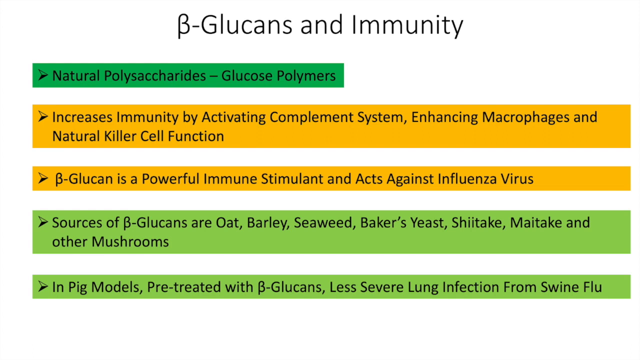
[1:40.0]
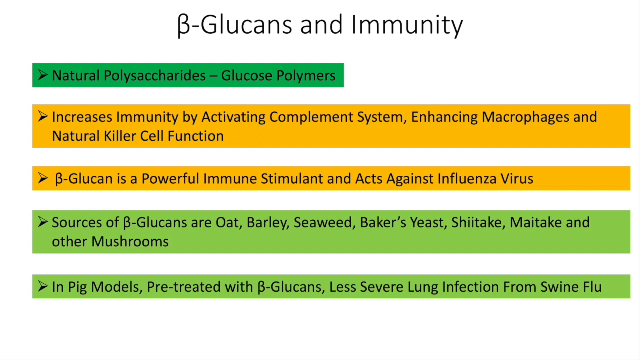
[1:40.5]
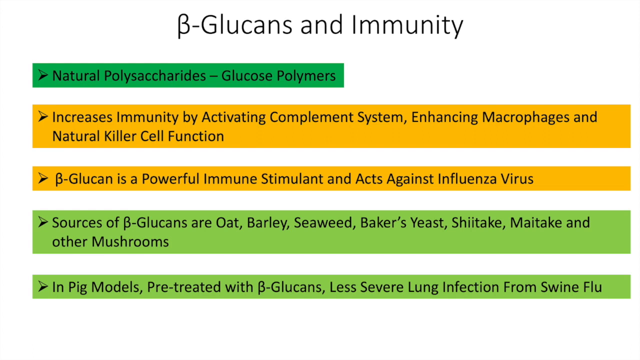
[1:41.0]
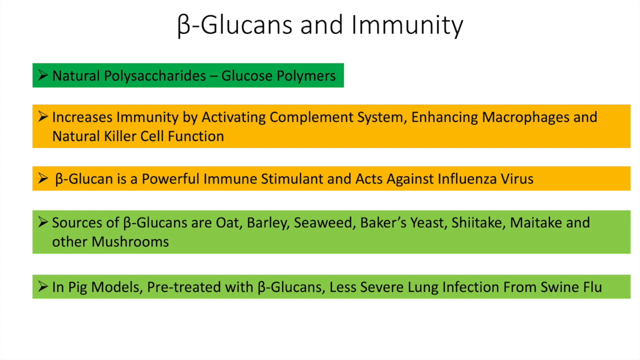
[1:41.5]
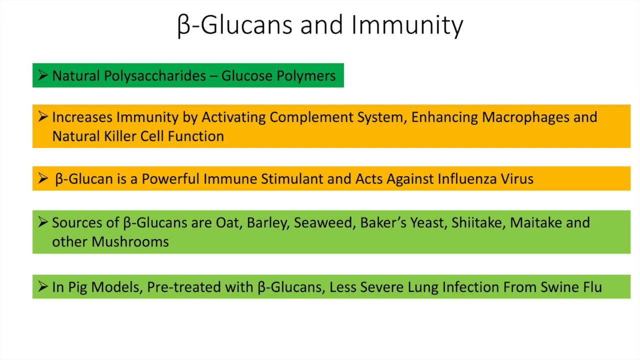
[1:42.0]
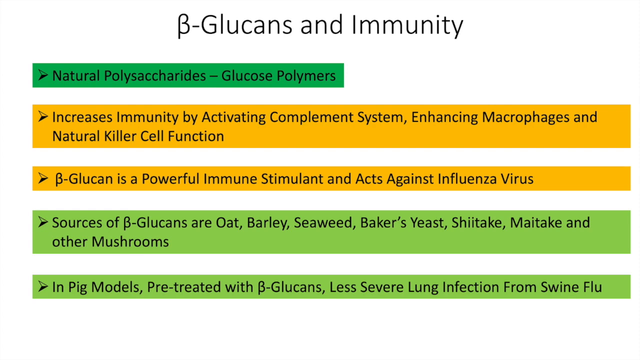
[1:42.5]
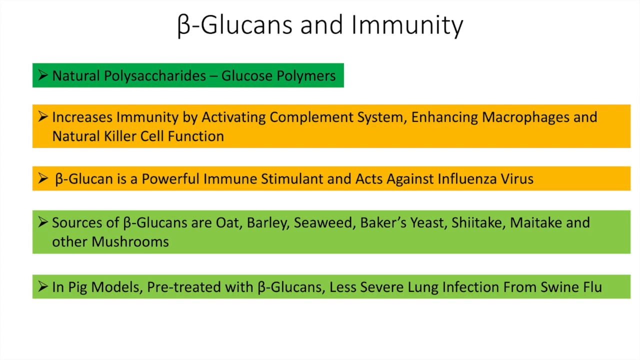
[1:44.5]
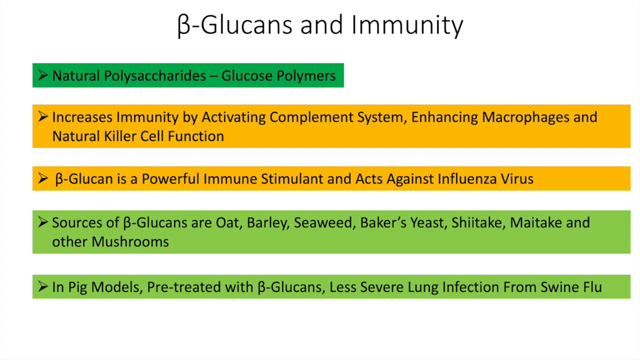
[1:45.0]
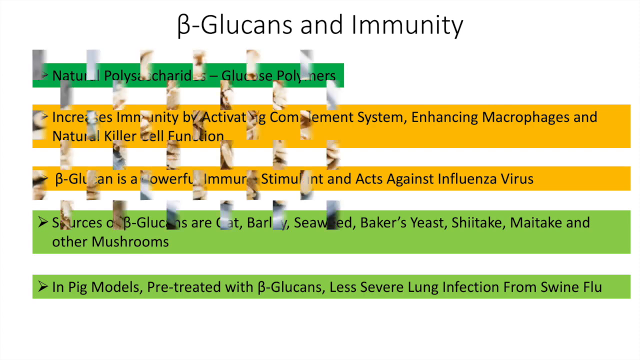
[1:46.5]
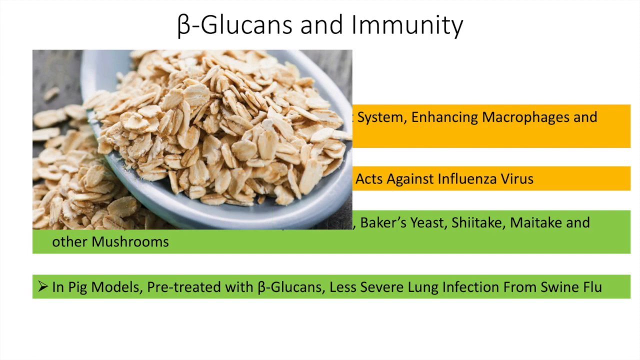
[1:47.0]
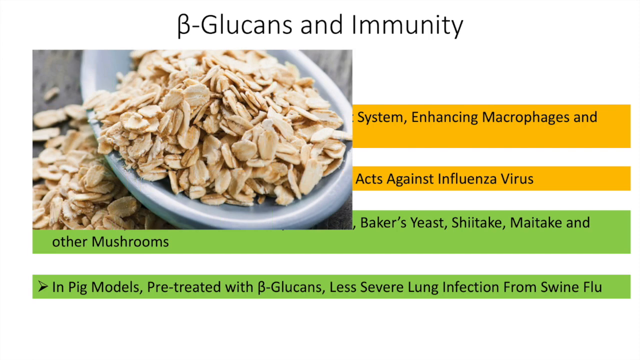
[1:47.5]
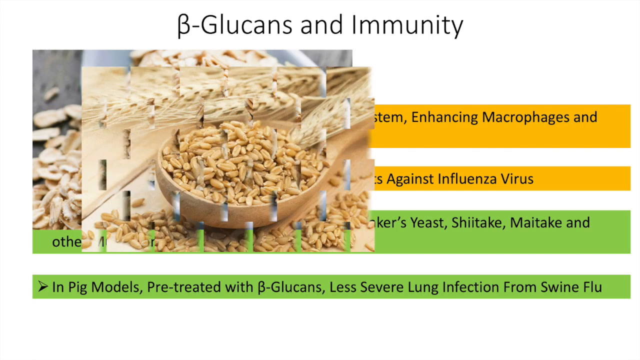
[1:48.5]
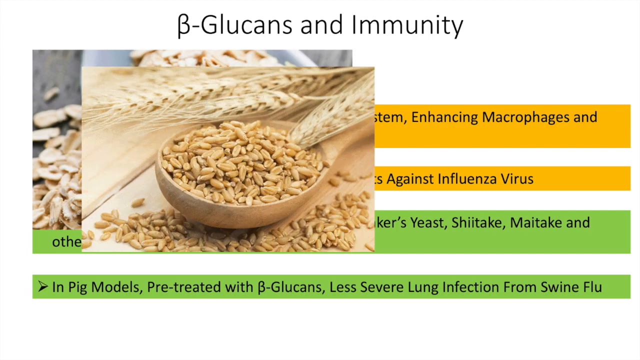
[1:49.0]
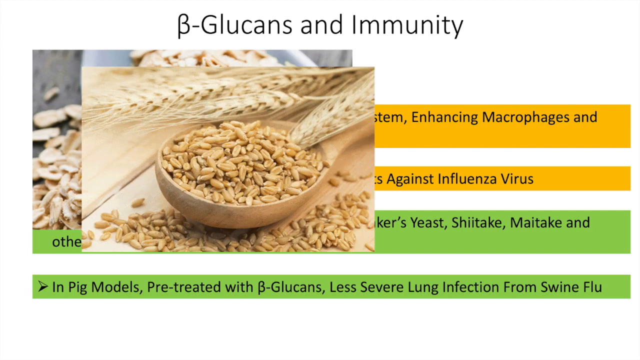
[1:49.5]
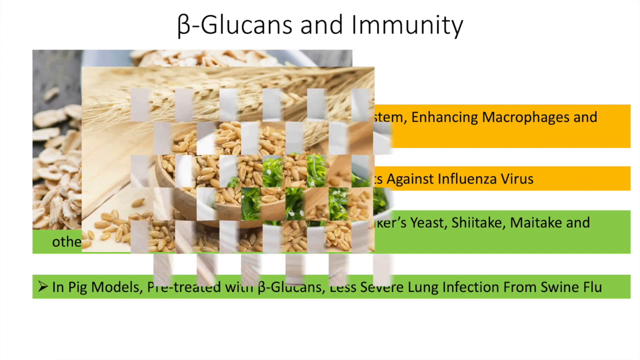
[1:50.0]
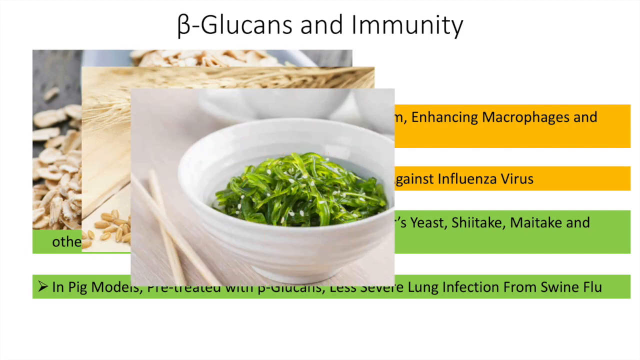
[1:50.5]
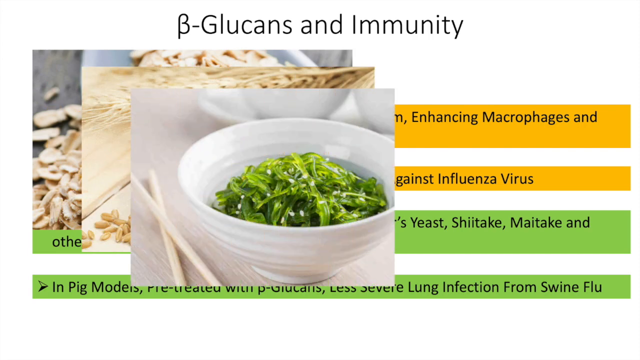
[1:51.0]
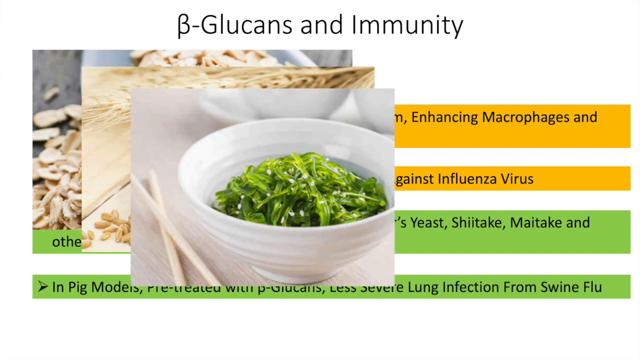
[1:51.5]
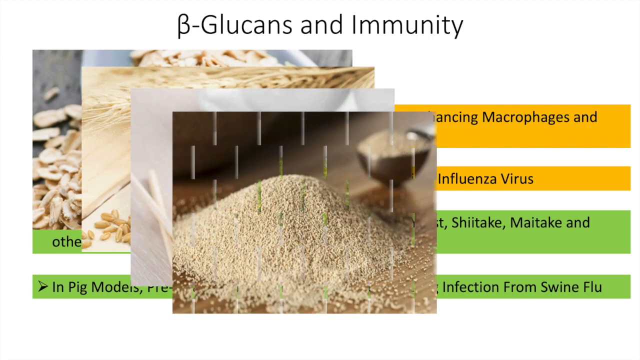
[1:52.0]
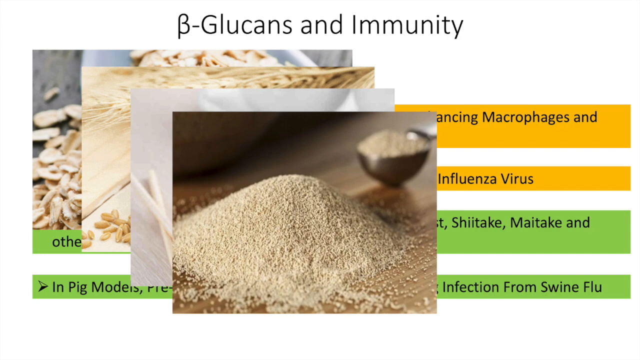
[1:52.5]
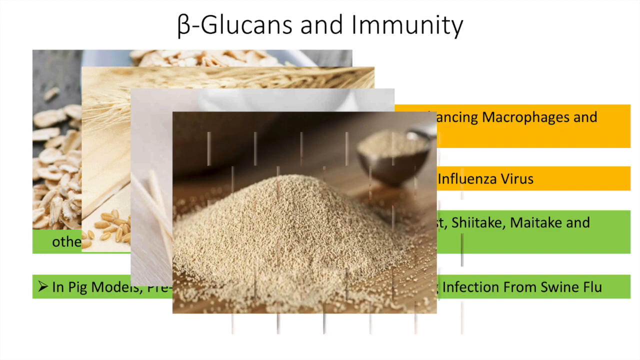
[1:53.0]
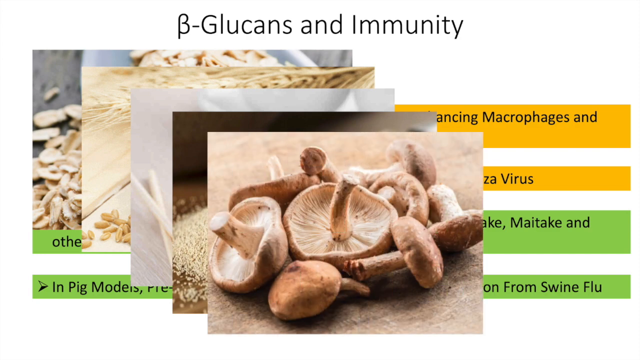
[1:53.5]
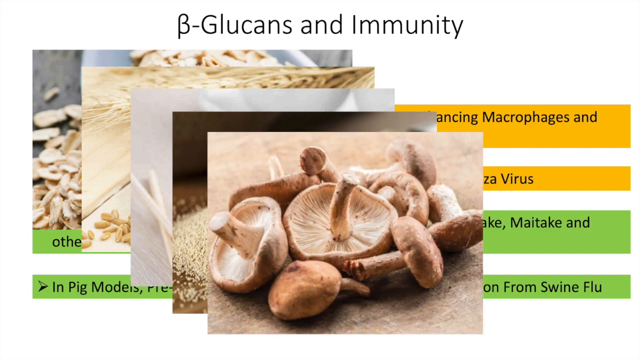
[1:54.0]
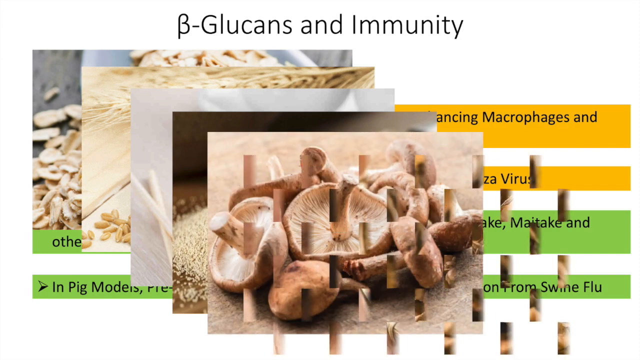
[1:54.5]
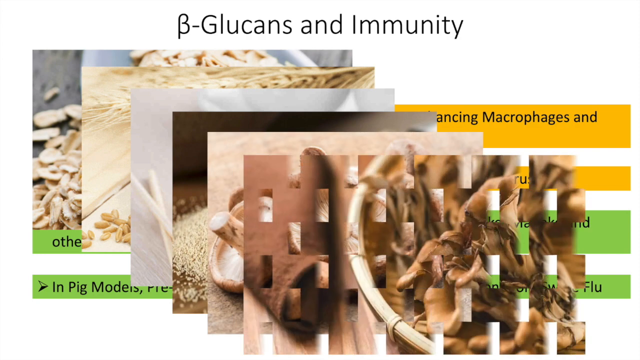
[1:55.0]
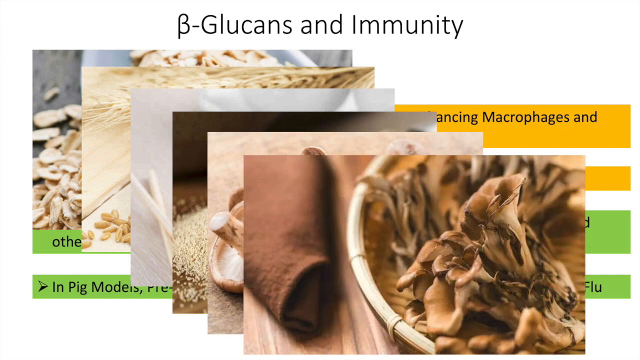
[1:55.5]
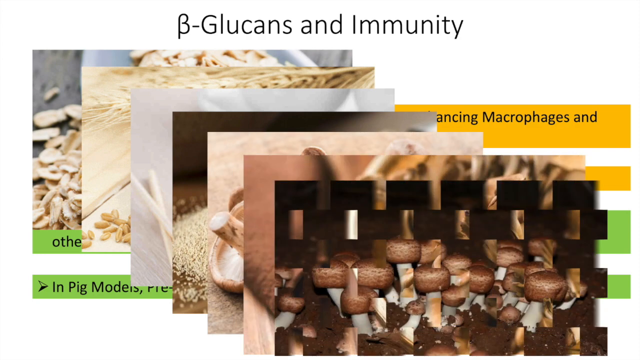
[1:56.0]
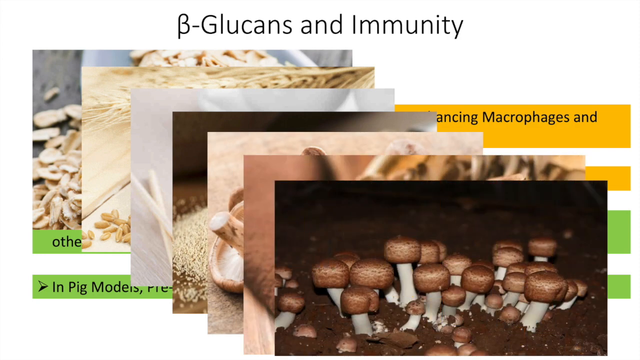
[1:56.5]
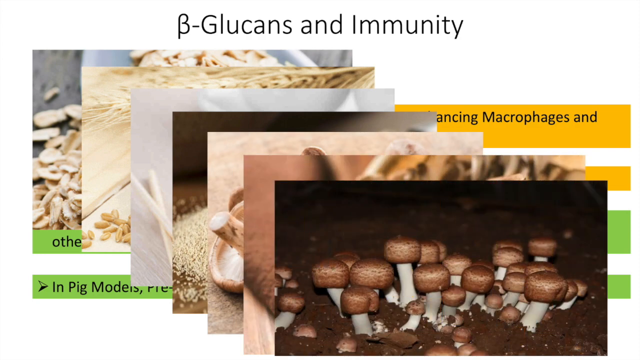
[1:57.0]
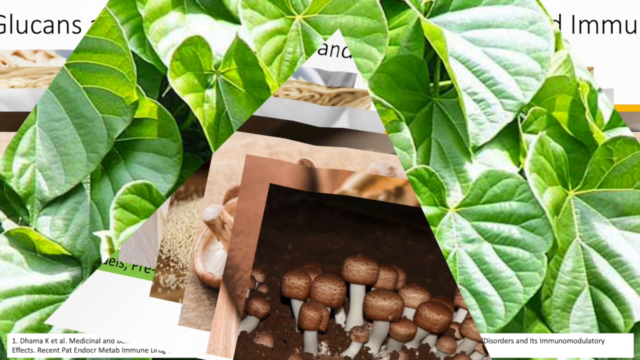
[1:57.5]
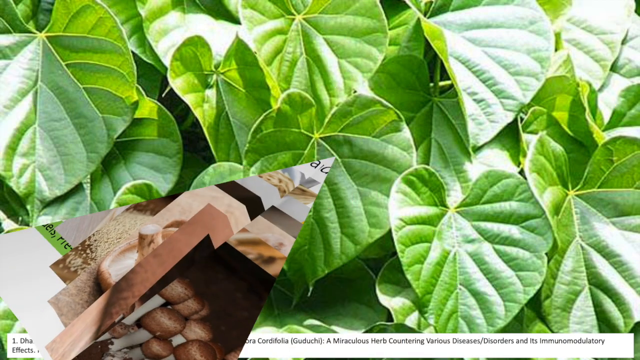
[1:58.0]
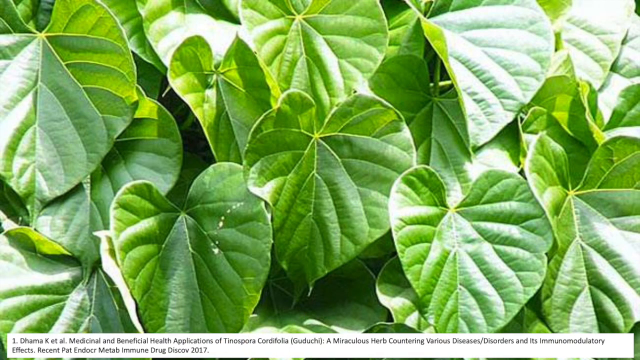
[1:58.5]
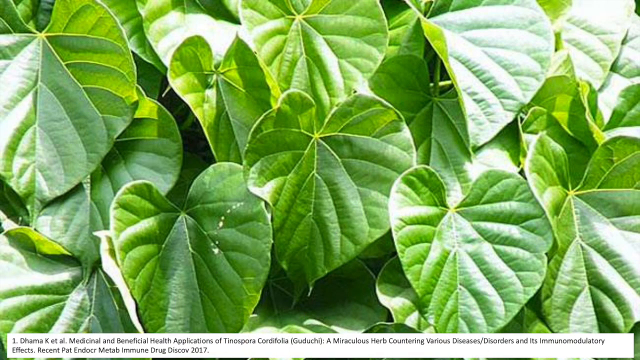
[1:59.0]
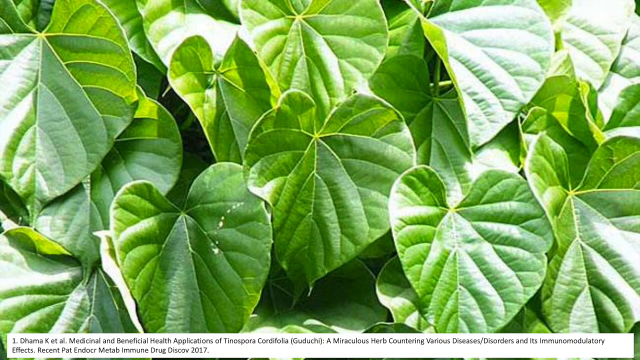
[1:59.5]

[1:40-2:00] A still slide has a title bar across the top reading "β-glue cans and immunity". Below it are a number of sentences, each contained in a rectangular box. The first, in a green box, reads "natural polysaccharides - glucose polymers". The next, in a yellow box, reads "increases immunity by activating complement system, enhancing macrophages and natural killer cell function". Below that are the words "β-glue can is a powerful immune stimulant and acts against influenza virus". Underneath, in a green box, is "sources of beta glue cans are oat, barley, seaweed, baker's yeast, shiitake, maitake, and other mushrooms". The final box at the bottom, also green, reads "in pig models pre-treated with beta glue cans, less severe lung infection from swine flu".